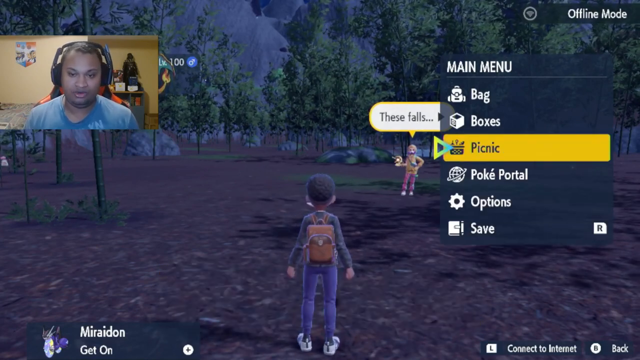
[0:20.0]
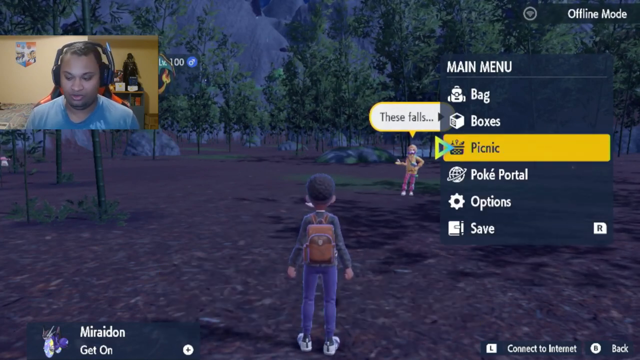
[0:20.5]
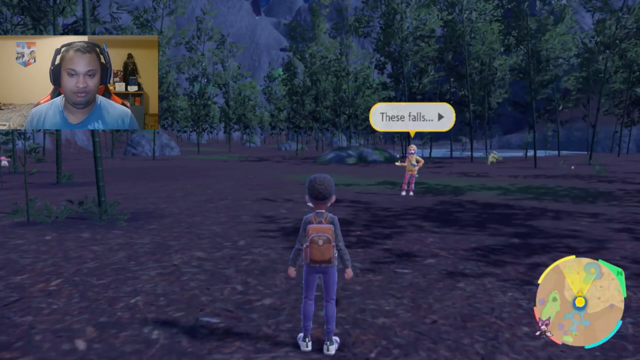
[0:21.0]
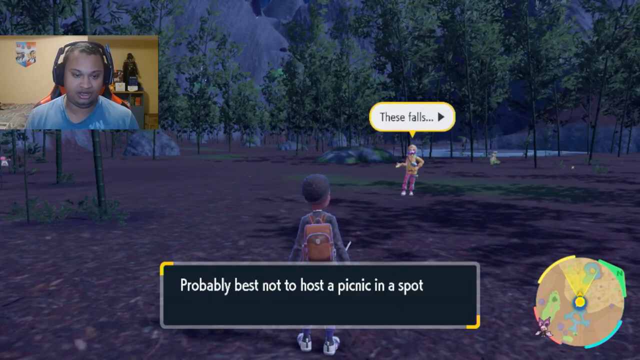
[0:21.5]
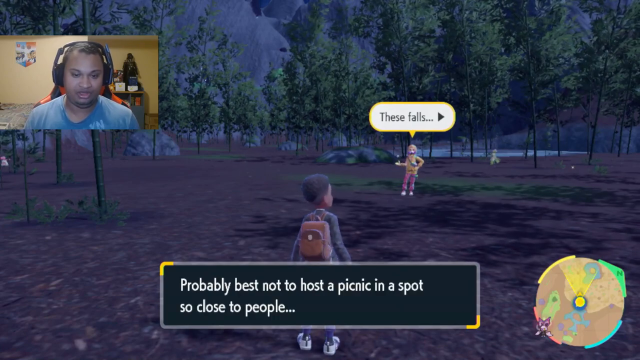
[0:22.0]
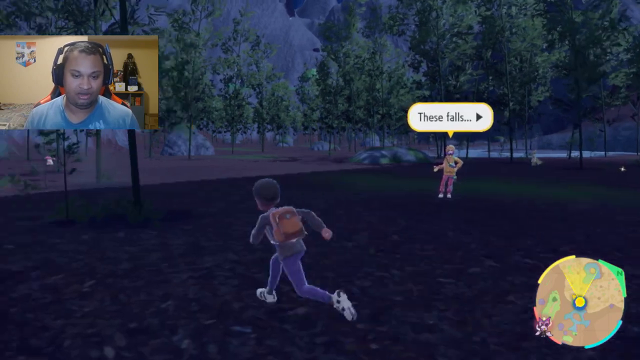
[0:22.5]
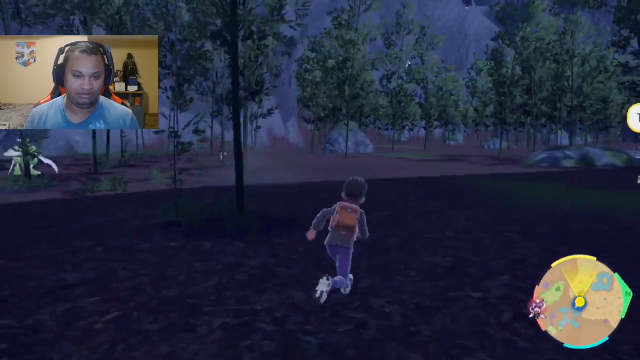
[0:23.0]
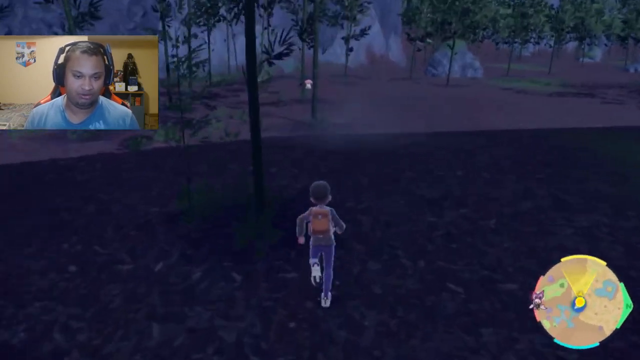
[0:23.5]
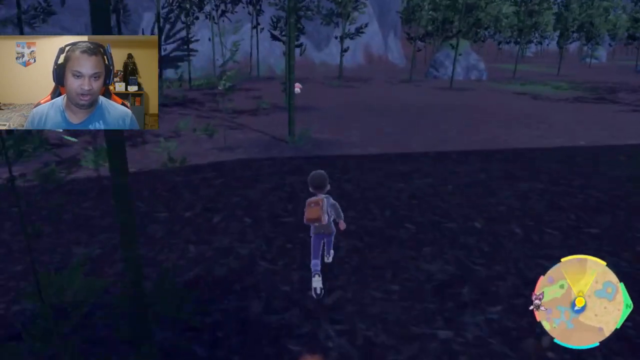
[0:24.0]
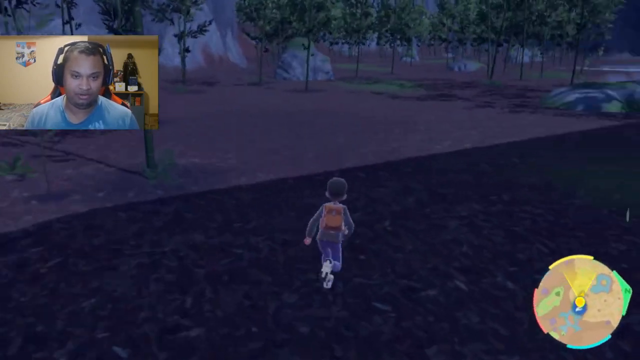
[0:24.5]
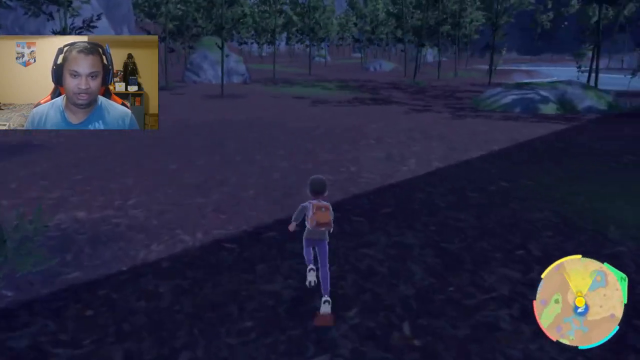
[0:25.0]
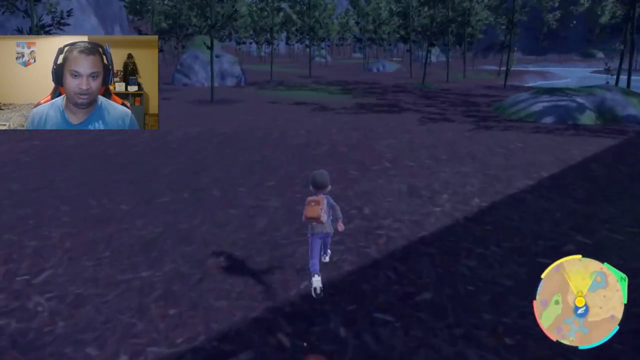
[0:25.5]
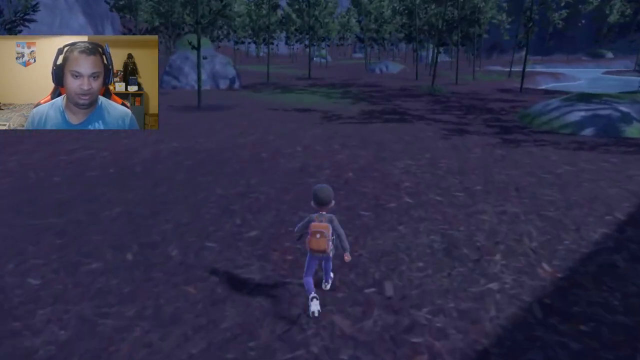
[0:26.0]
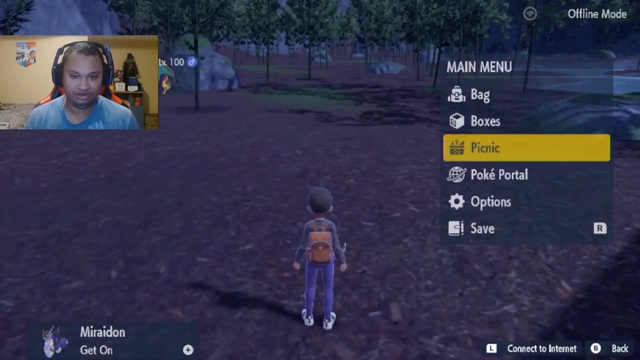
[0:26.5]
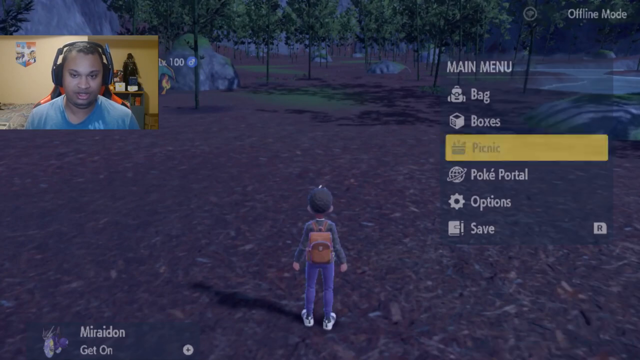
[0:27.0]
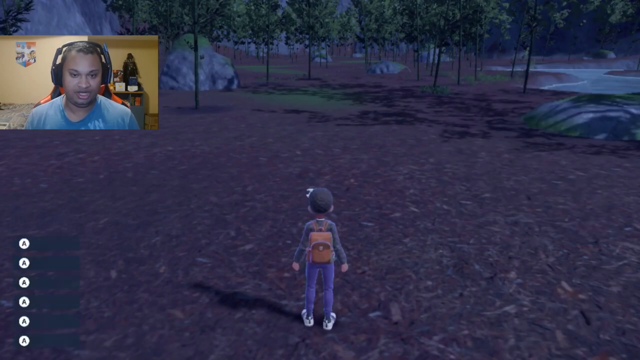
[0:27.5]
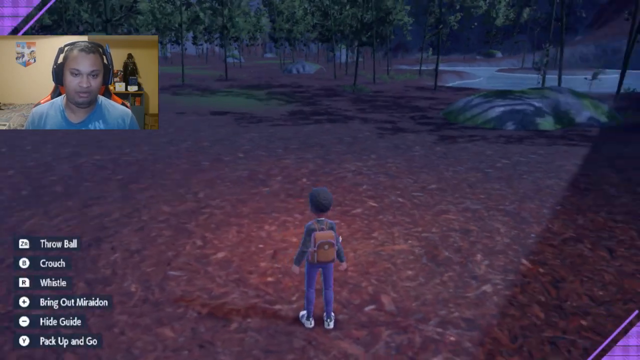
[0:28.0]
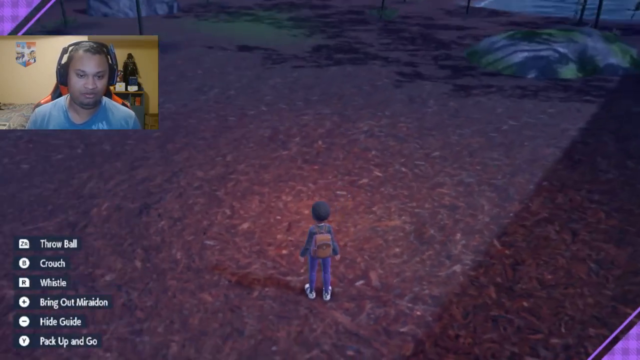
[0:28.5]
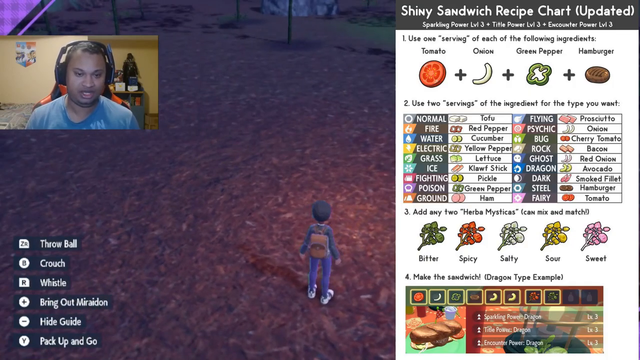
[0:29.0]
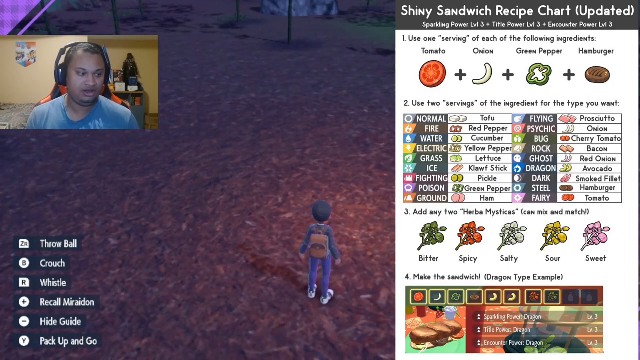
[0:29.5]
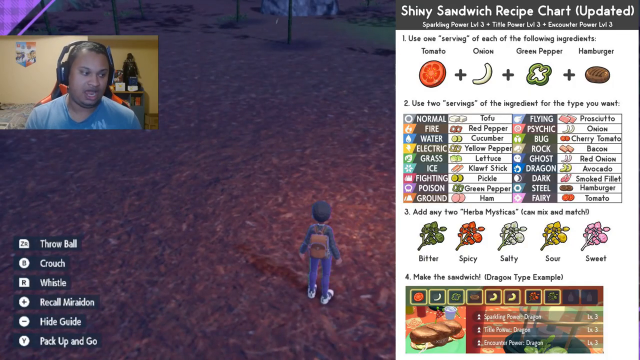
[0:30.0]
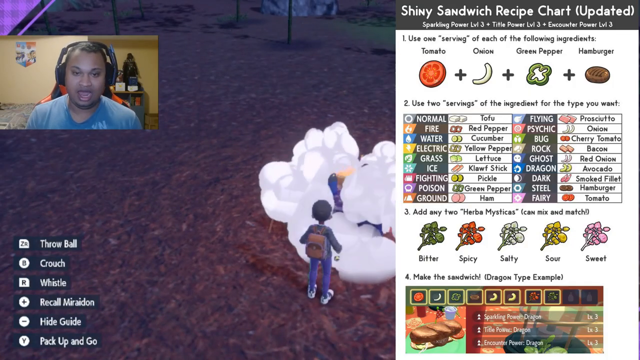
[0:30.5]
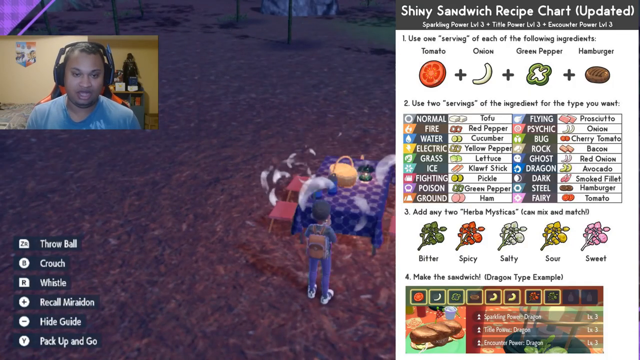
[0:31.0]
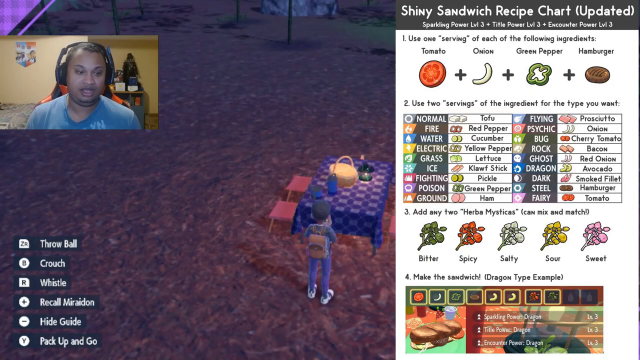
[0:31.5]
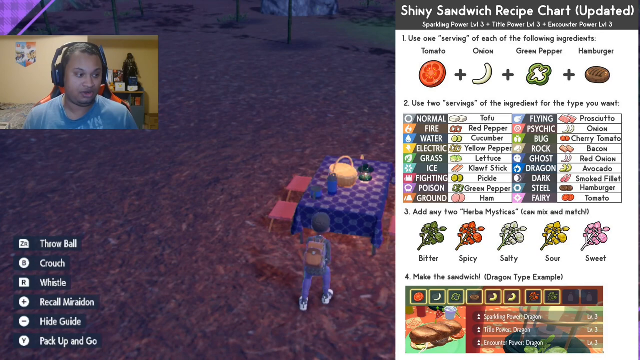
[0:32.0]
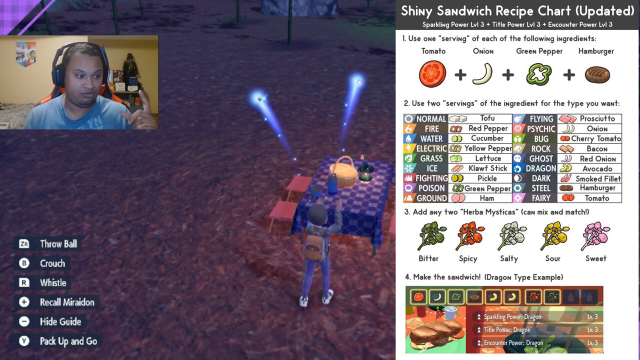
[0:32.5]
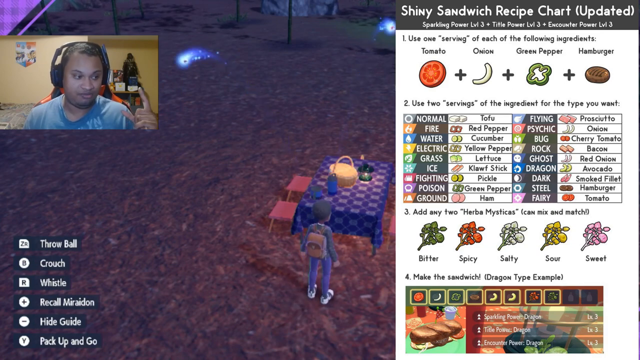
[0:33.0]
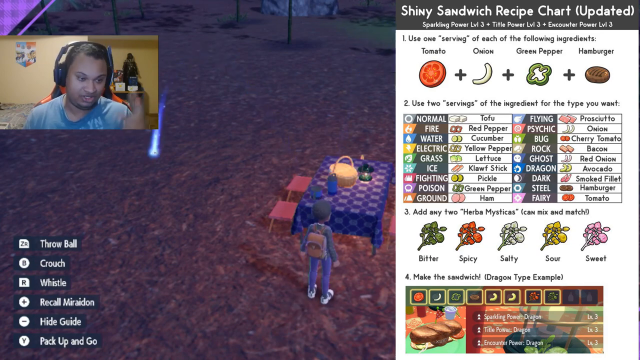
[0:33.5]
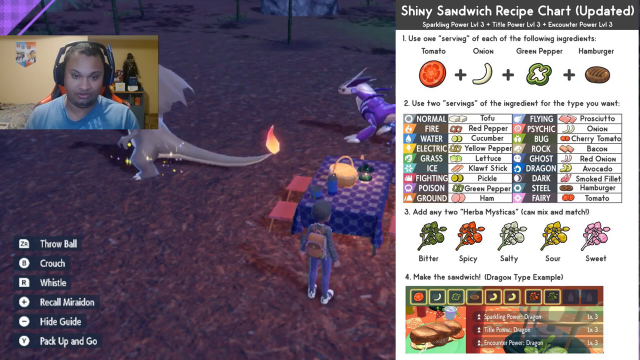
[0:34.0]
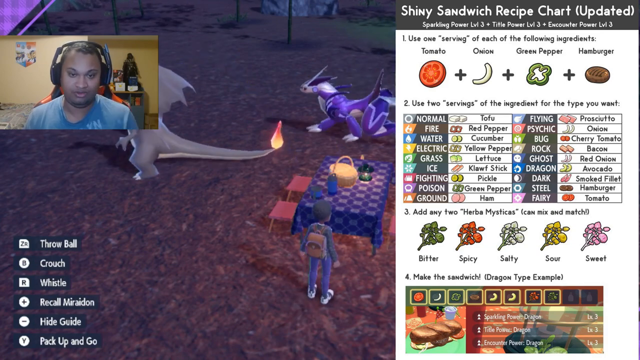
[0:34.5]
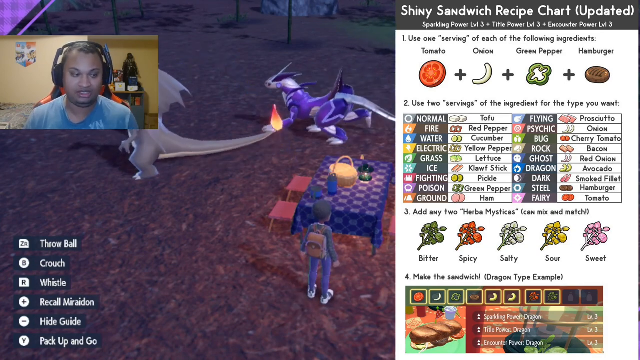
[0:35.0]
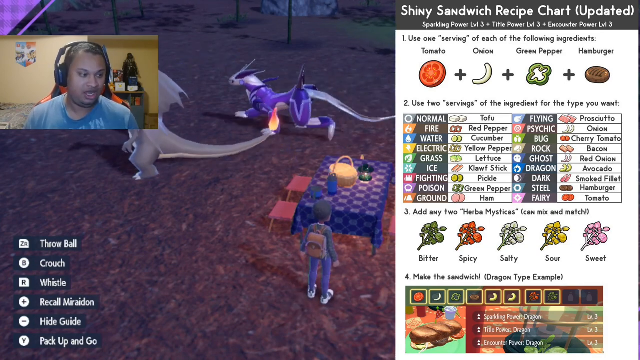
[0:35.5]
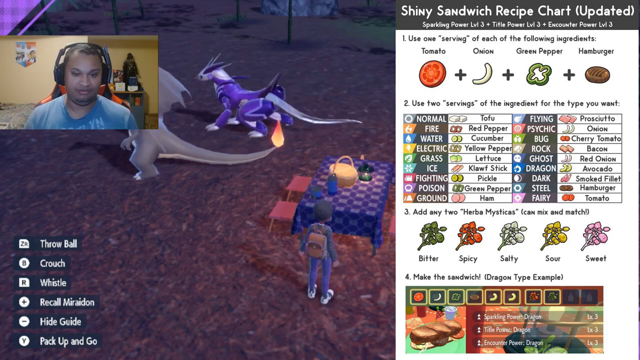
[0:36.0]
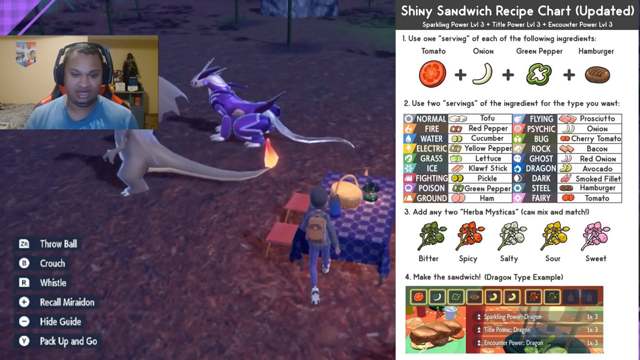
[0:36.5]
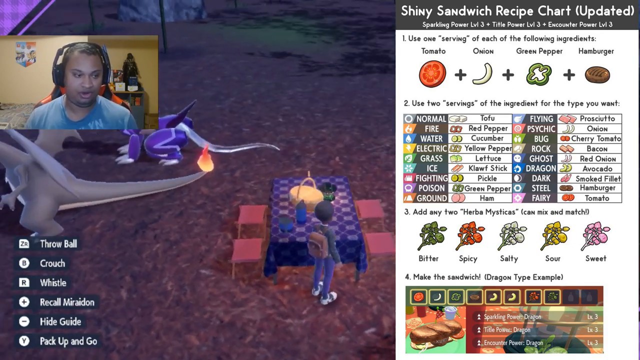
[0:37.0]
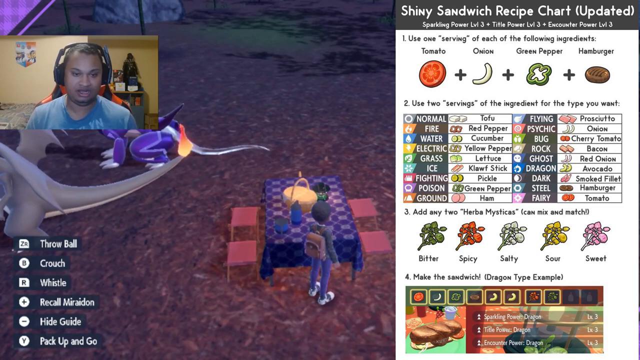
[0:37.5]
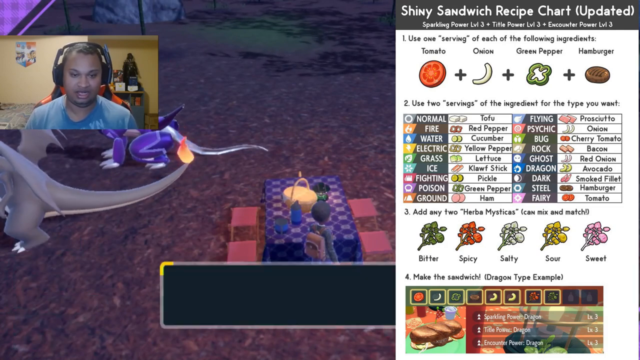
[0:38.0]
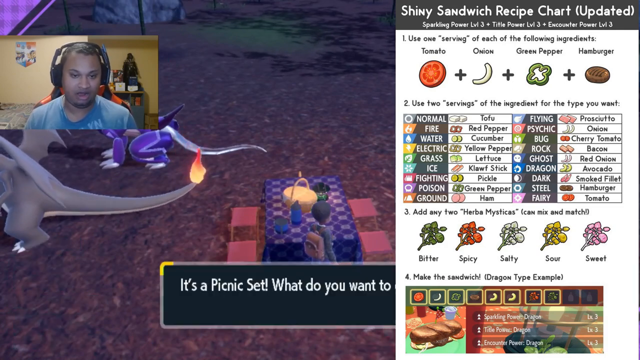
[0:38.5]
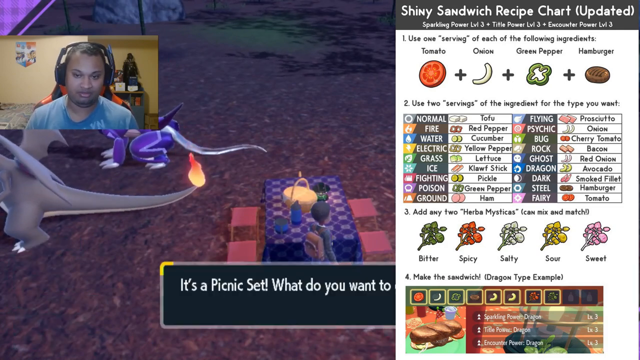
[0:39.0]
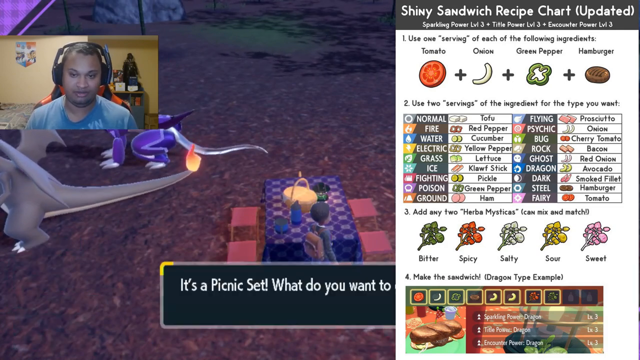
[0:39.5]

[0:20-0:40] The game apparently is a Pokemon game, mentioned in the subtitles of what the characters say on screen. The boy starts running around and puts out some magic fireballs, and a picnic table appears in the park area along with what look like two dinosaurs or dragons next to it. One is gray and is apparently a dragon with wings; the other is a little smaller and gray and wears what looks like a purple wizard's robe and hat. The boy goes back to his starting point across from the girl, runs again, and creates the picnic table with fireballs and the two creatures once more. He returns to the starting point a third time, runs over to the same area, and creates the table again with the fireballs and the two dragons. He seems to keep going back to the starting point to repeat this loop, apparently not getting it right each time. A big menu keeps getting pulled up with a bunch of options for different types of foods, apparently for creating a meal on the picnic table he is summoning.